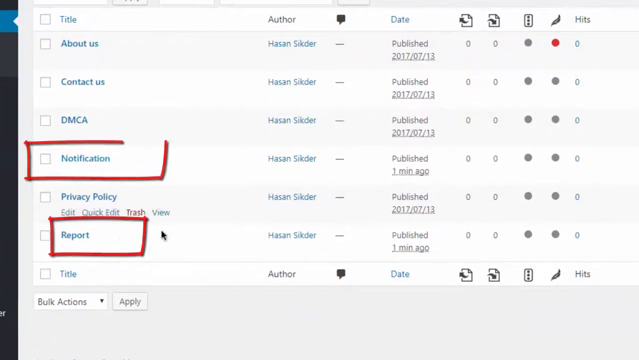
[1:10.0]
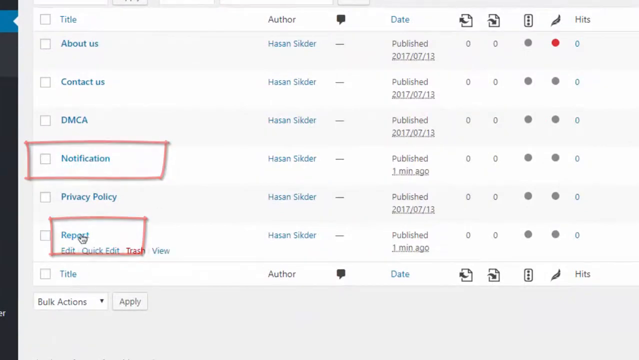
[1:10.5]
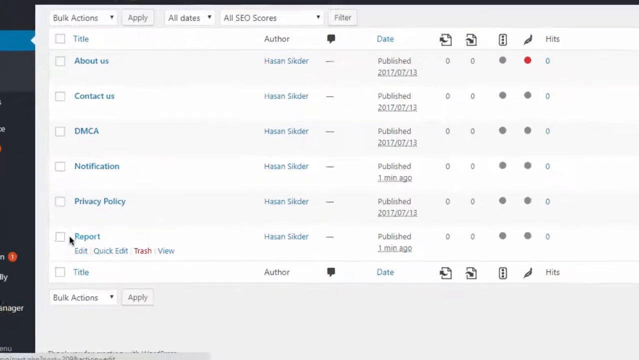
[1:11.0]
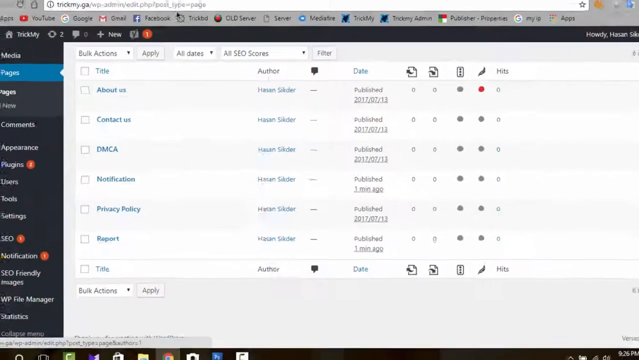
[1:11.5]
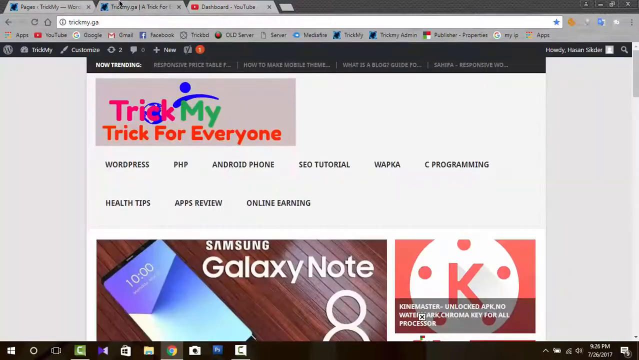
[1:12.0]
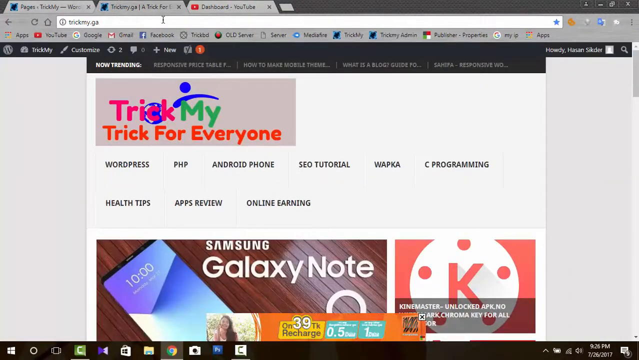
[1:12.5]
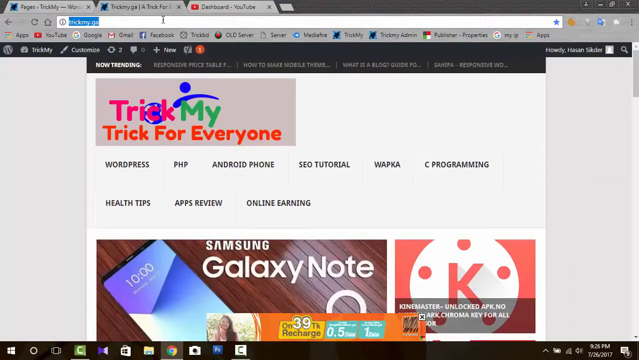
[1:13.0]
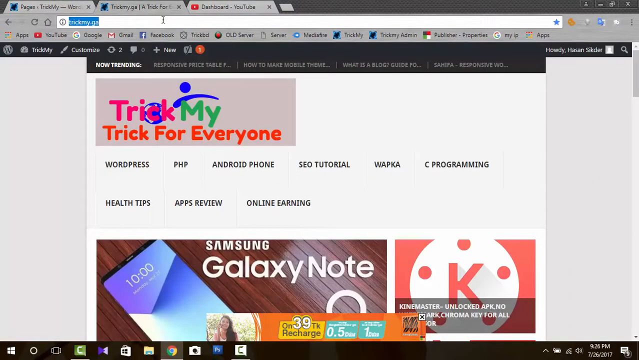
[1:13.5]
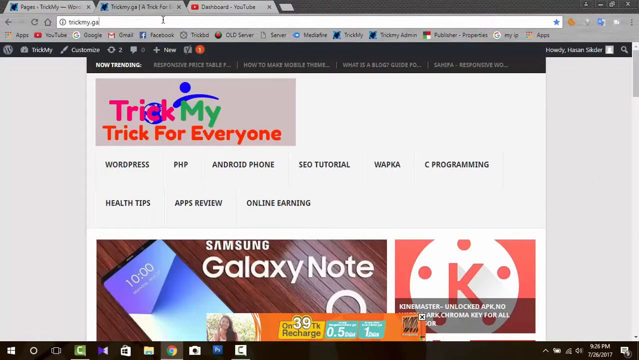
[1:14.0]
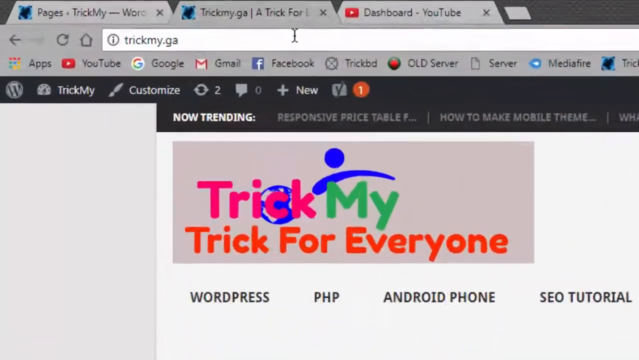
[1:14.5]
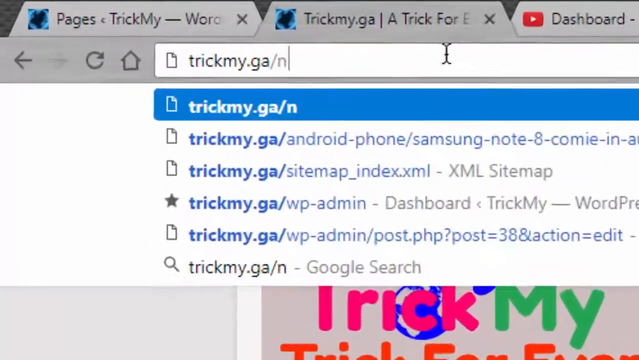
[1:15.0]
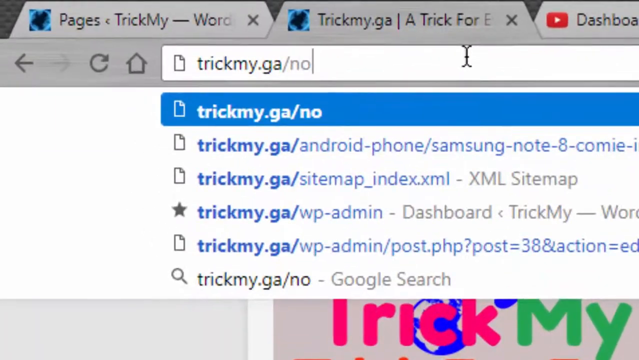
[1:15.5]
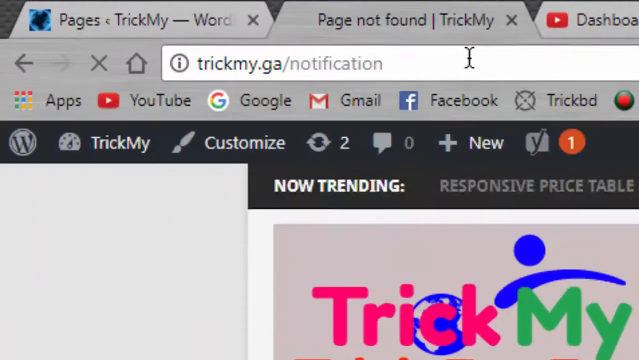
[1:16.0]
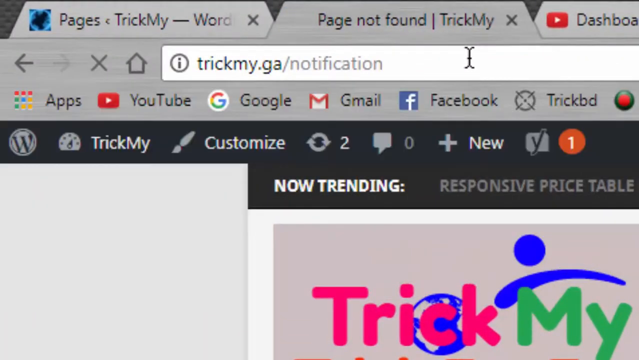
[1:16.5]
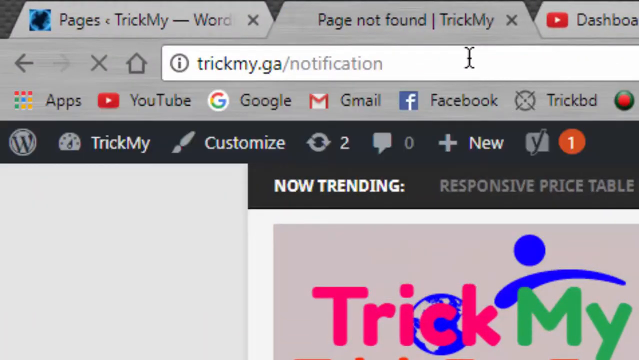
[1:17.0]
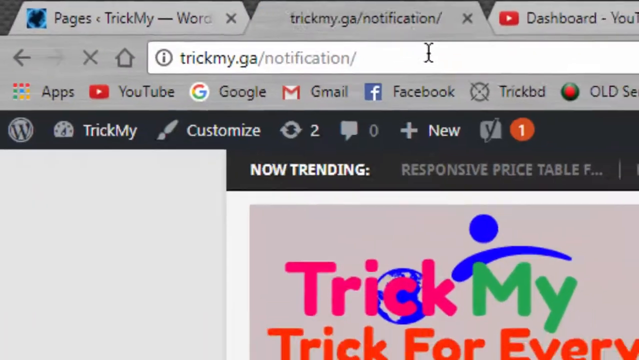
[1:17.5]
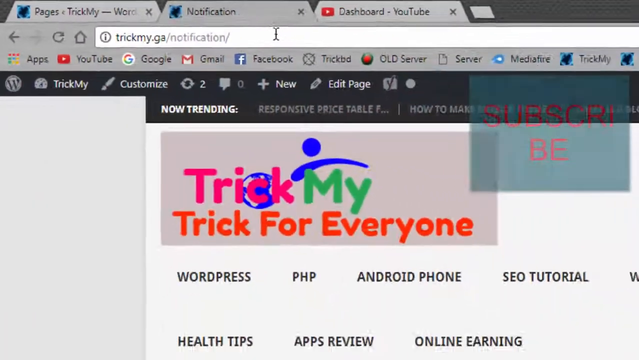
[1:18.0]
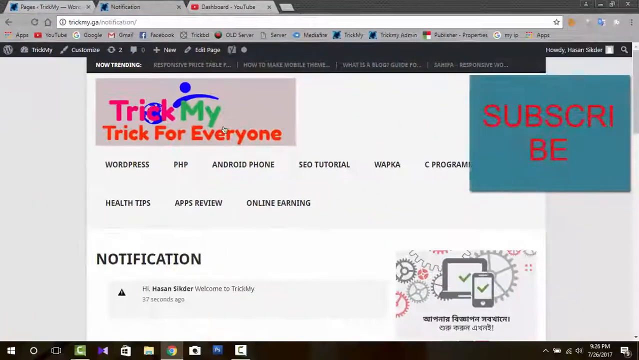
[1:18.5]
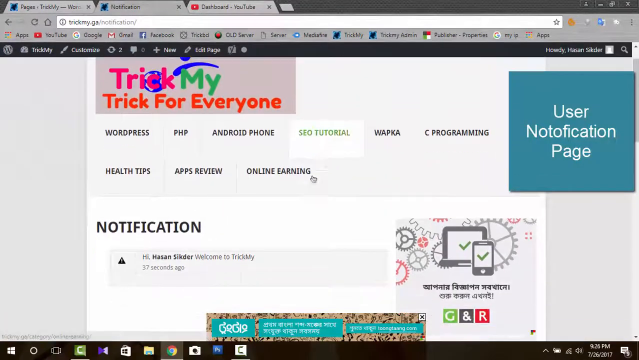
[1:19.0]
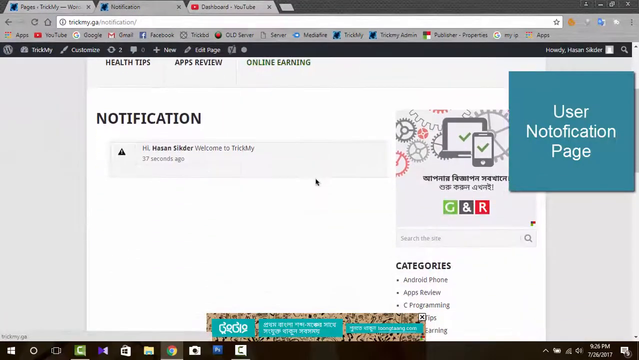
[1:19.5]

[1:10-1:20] The user types "trickmy.ga/notification" into the URL address bar at the top of the browser. This opens a page of the website, called "trick my trick for everyone". An advertisement for a Samsung phone is visible on the page and disappears as they scroll down. The word "notifications" appears very large in a black font.